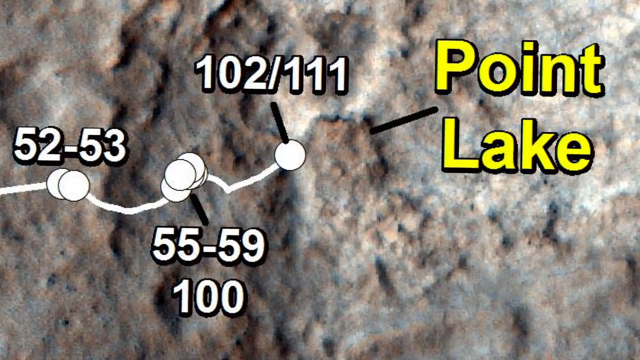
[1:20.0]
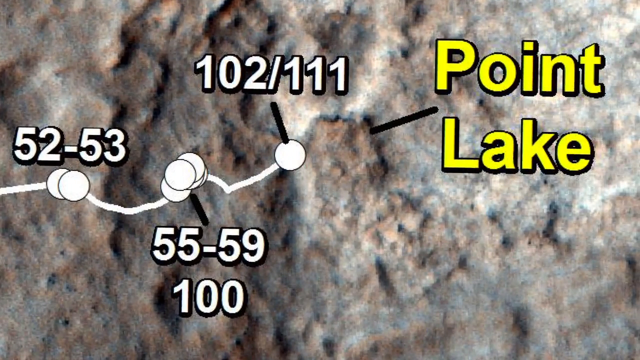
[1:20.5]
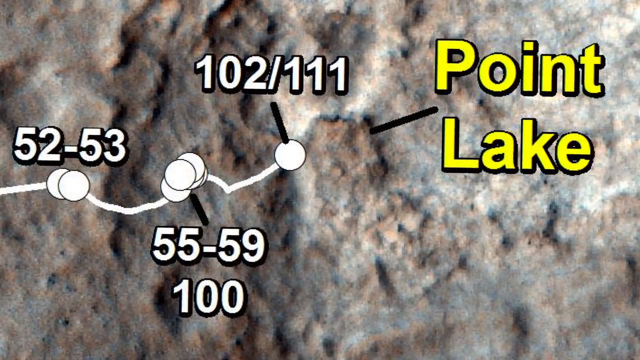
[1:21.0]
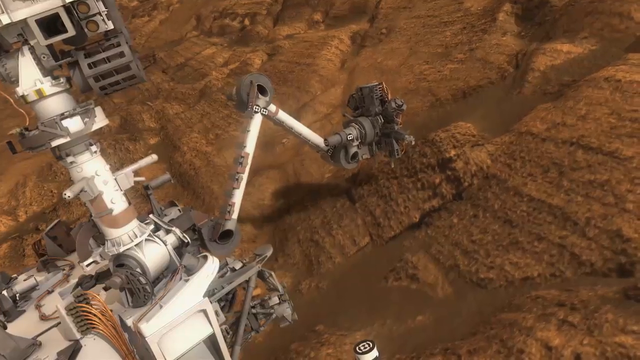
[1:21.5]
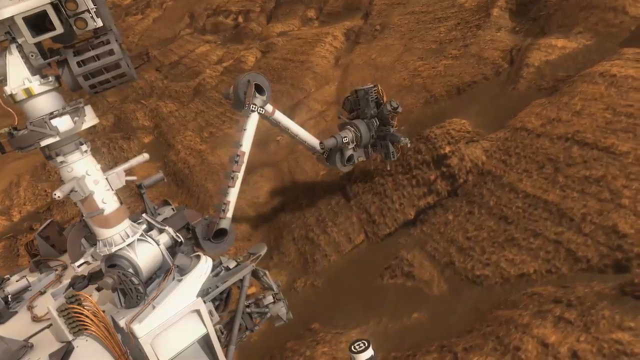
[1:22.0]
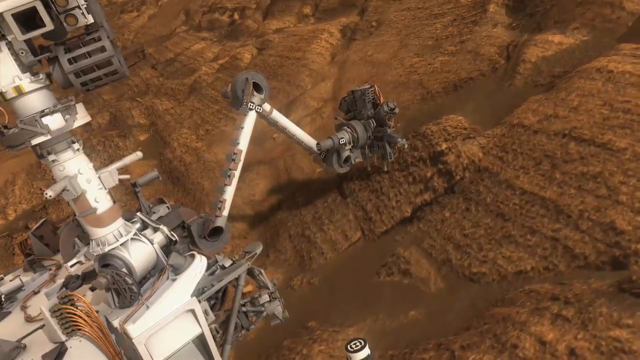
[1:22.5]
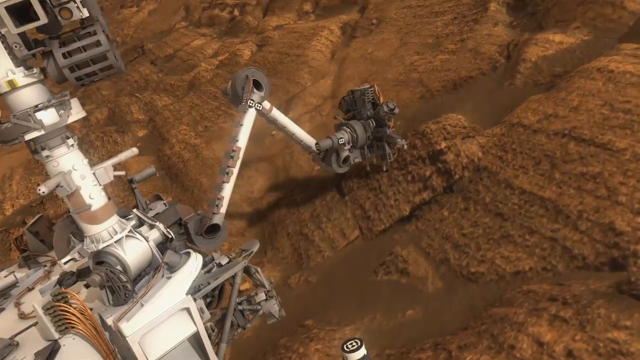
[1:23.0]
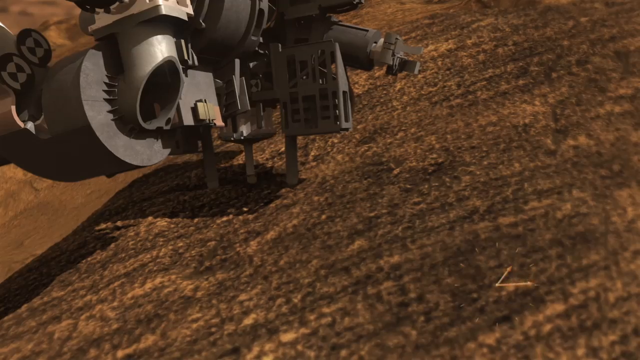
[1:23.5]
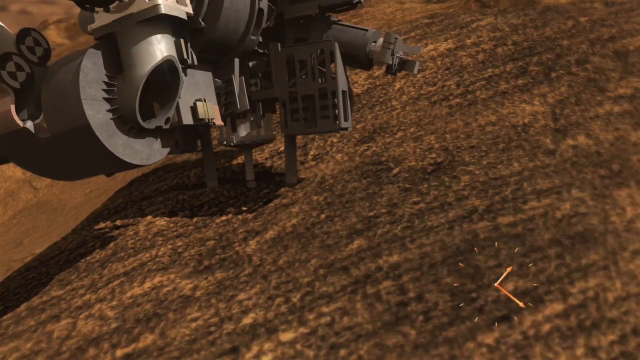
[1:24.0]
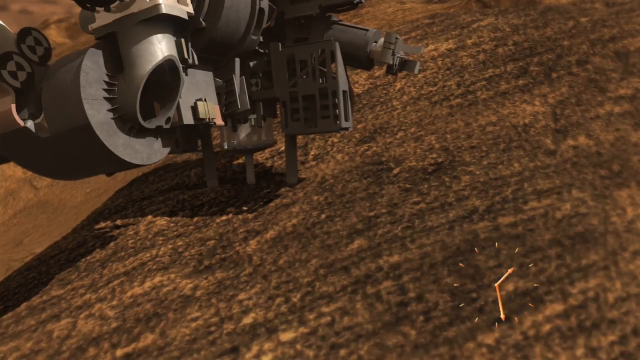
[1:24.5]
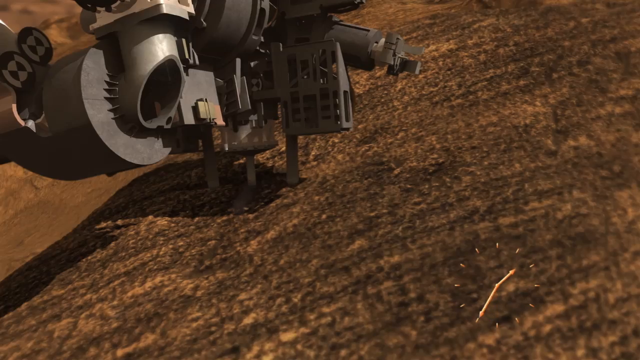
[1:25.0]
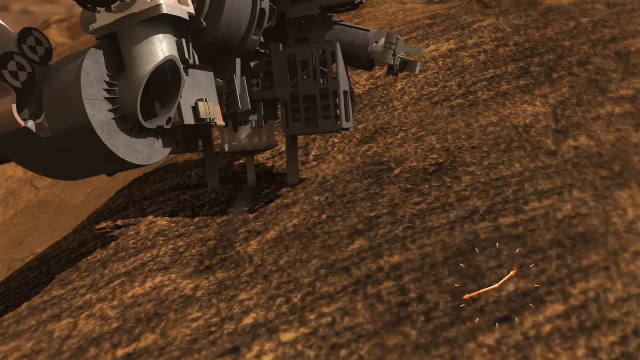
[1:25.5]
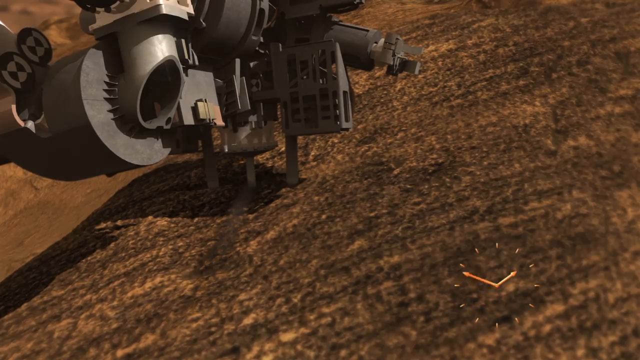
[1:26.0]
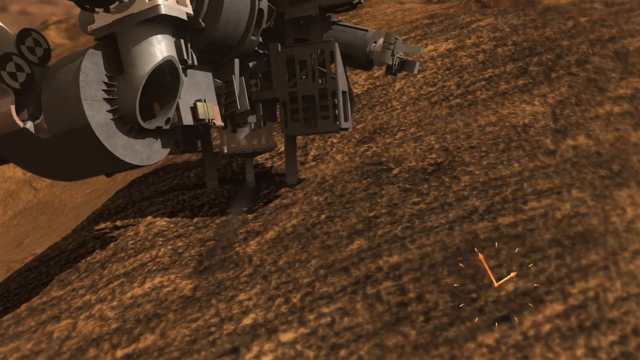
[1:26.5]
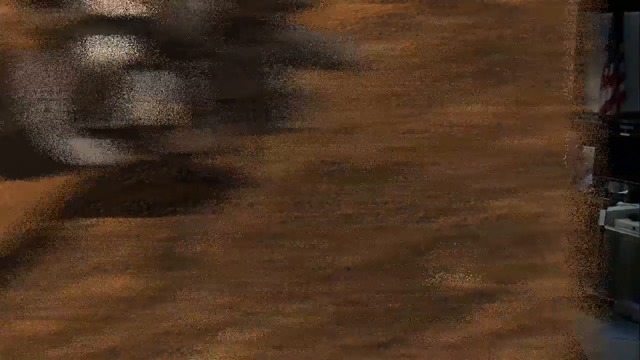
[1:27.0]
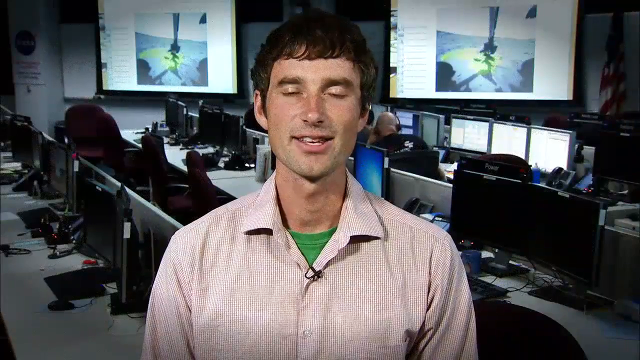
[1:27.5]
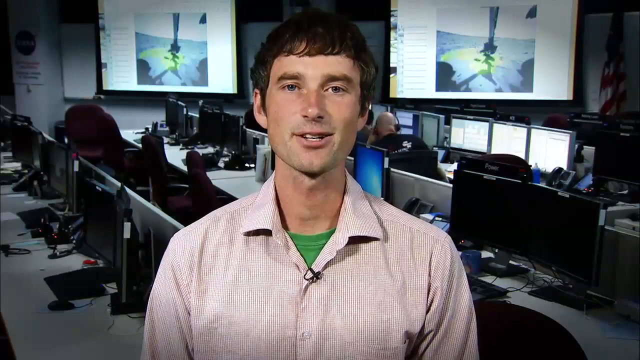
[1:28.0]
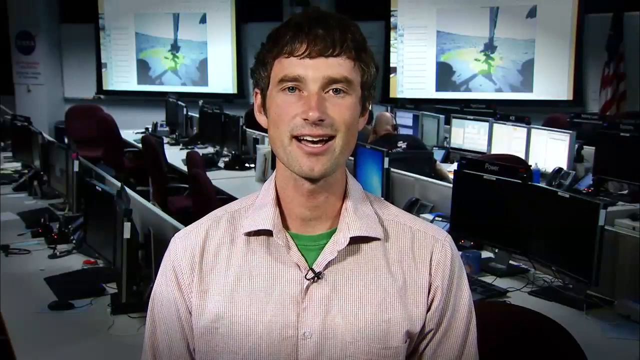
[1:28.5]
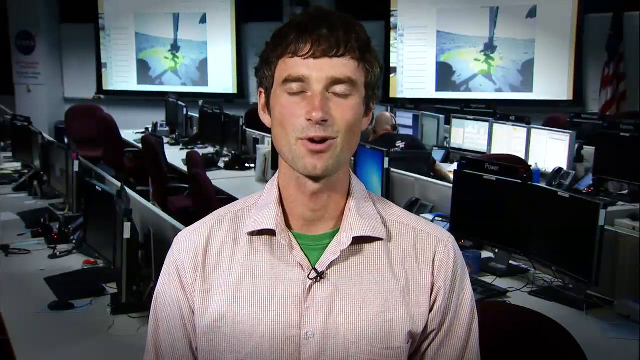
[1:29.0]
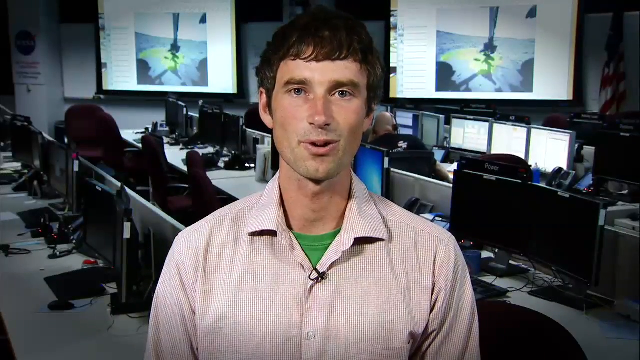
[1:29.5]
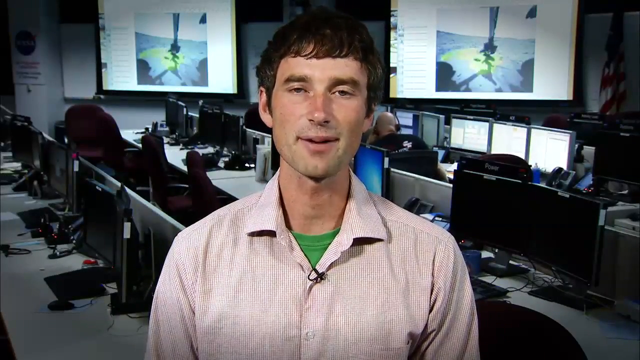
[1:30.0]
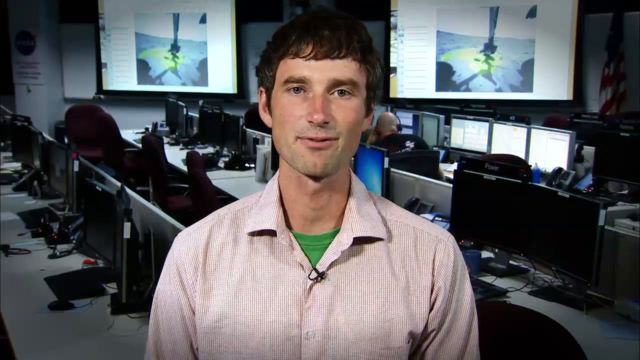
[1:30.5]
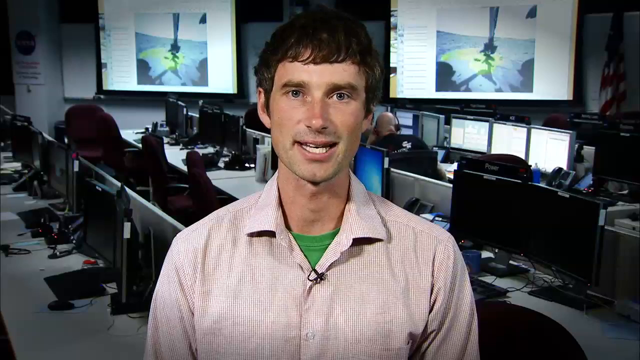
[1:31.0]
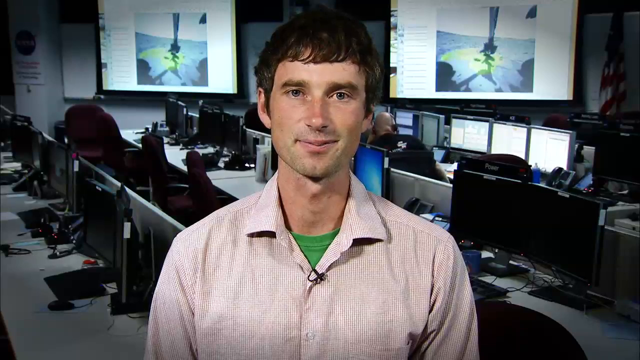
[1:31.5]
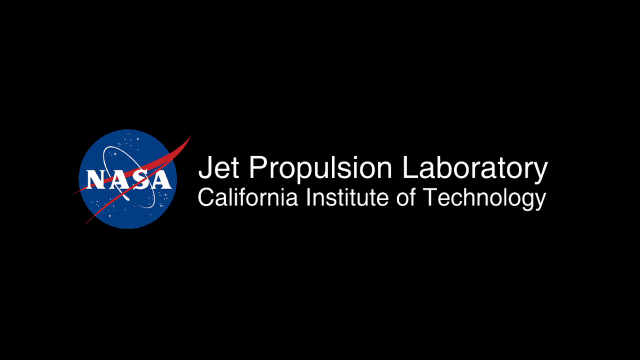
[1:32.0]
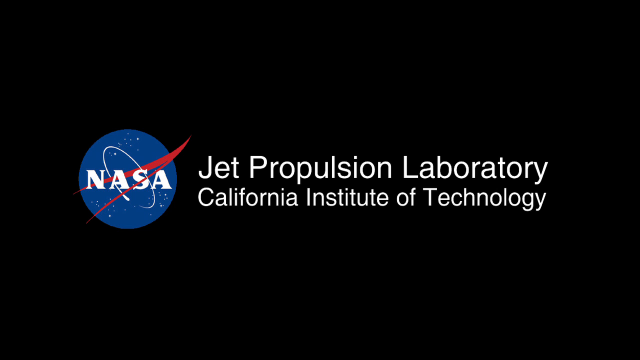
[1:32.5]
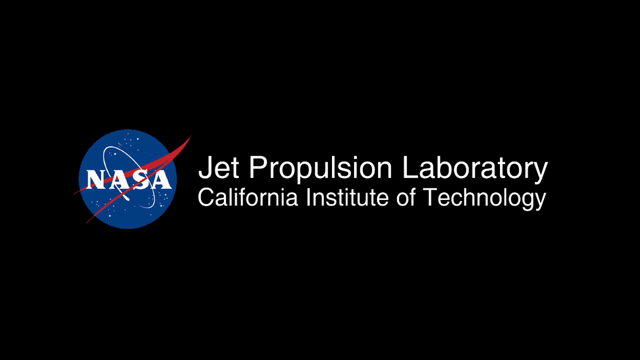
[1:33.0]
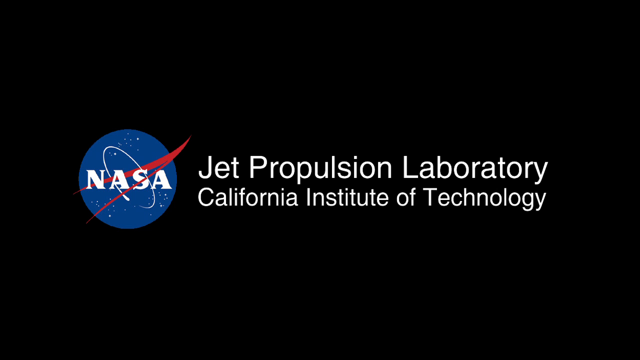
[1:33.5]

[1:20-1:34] Two parts appear on screen; one shows the numbers 52 to 53, 102 to 111, 52, 55 to 59, and 100.